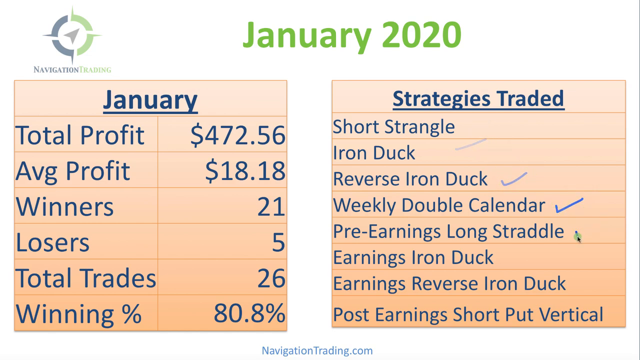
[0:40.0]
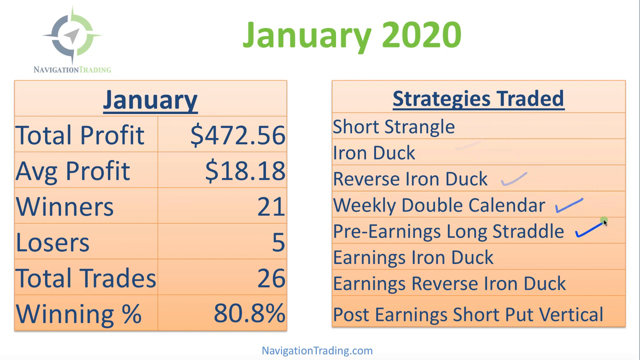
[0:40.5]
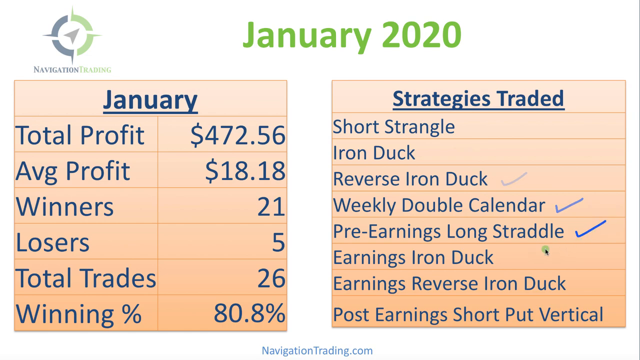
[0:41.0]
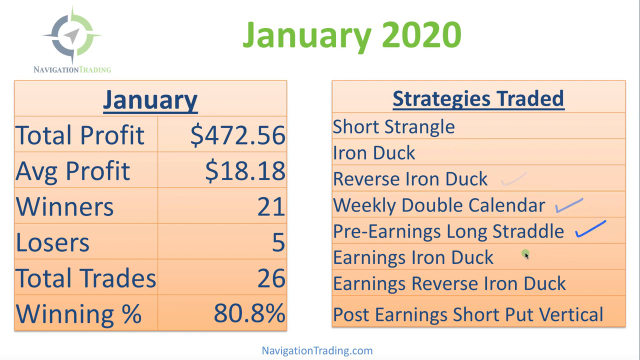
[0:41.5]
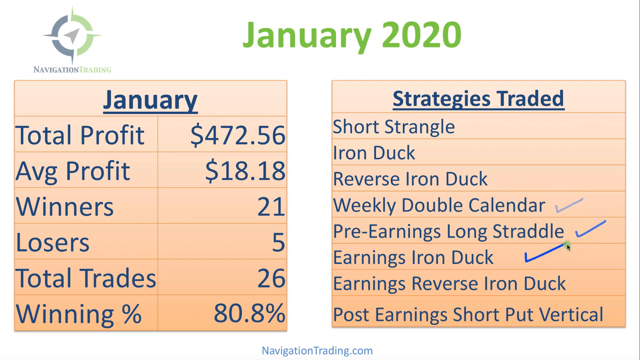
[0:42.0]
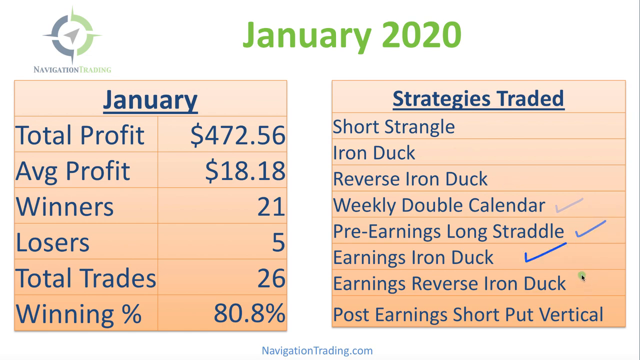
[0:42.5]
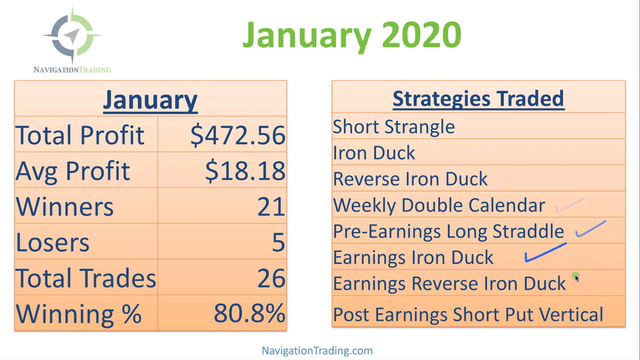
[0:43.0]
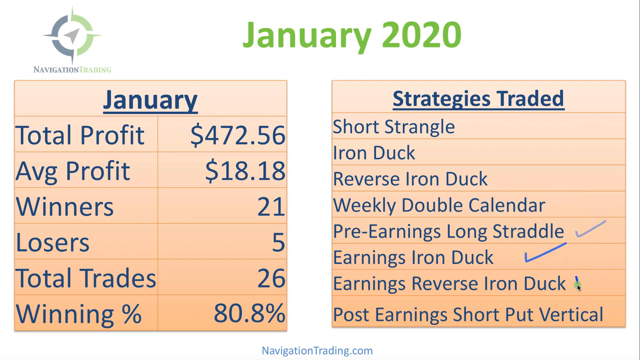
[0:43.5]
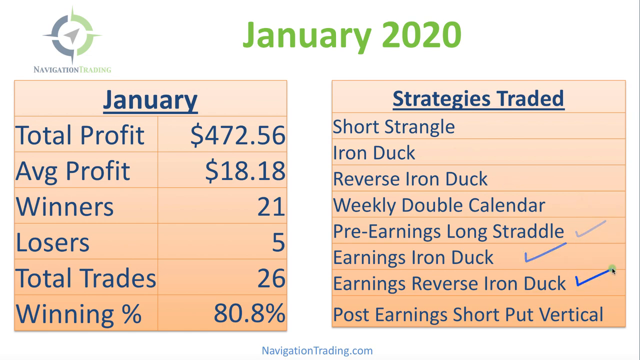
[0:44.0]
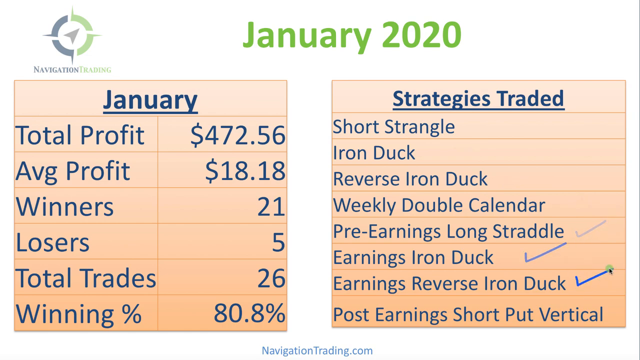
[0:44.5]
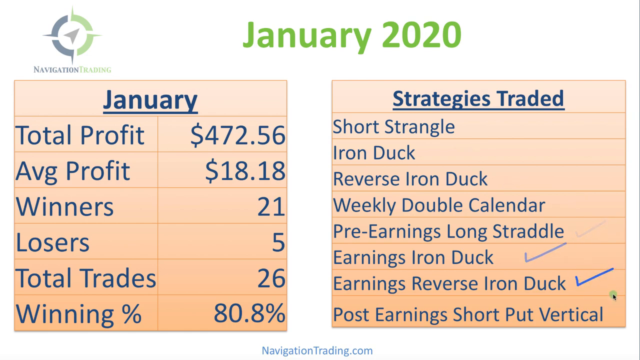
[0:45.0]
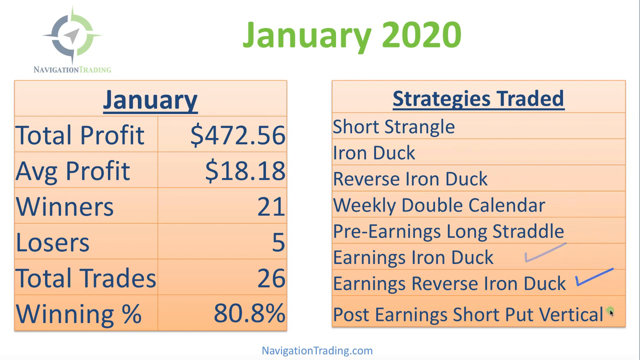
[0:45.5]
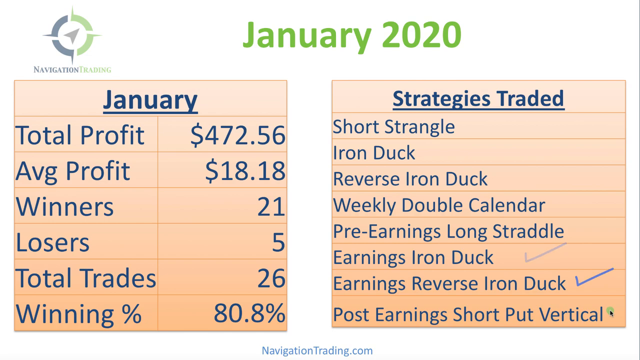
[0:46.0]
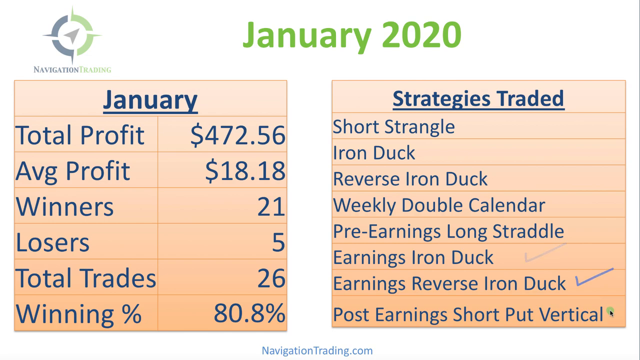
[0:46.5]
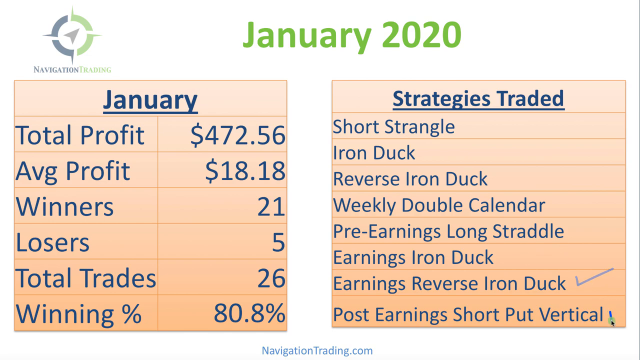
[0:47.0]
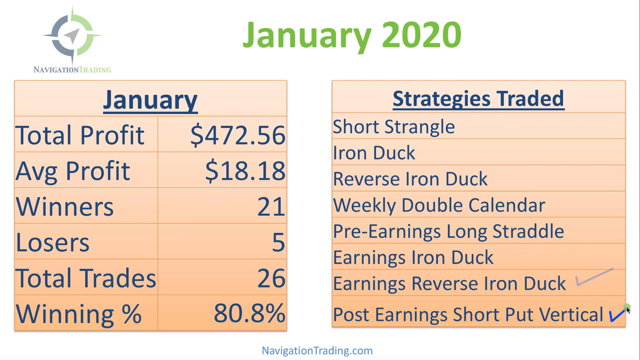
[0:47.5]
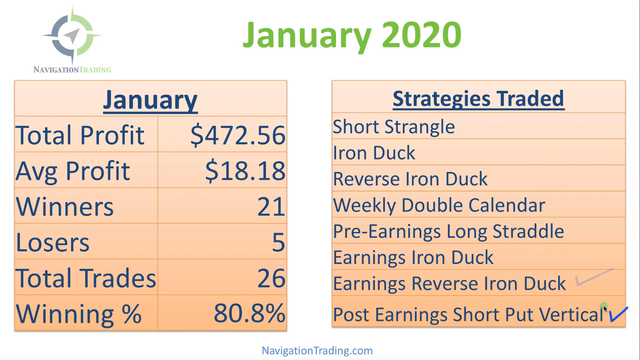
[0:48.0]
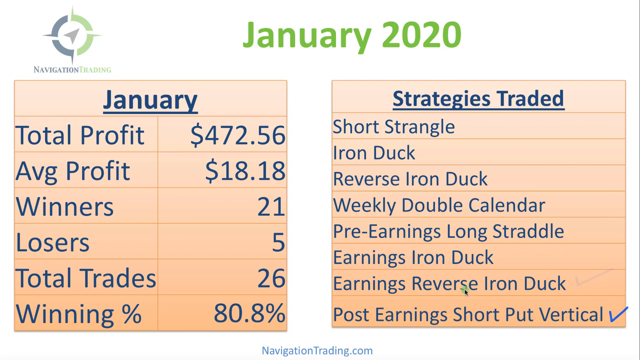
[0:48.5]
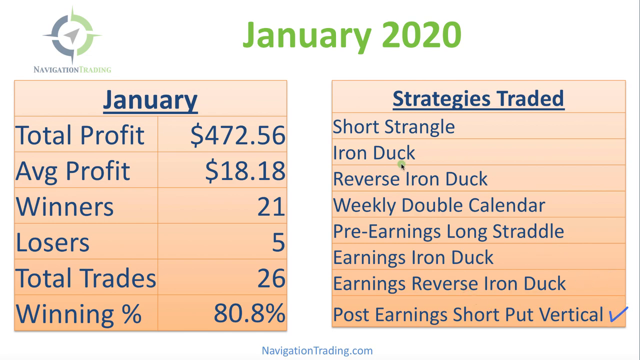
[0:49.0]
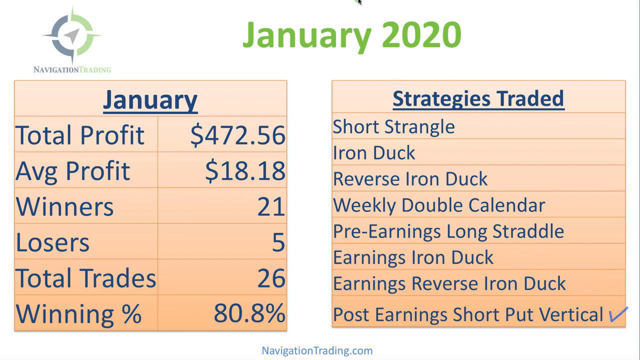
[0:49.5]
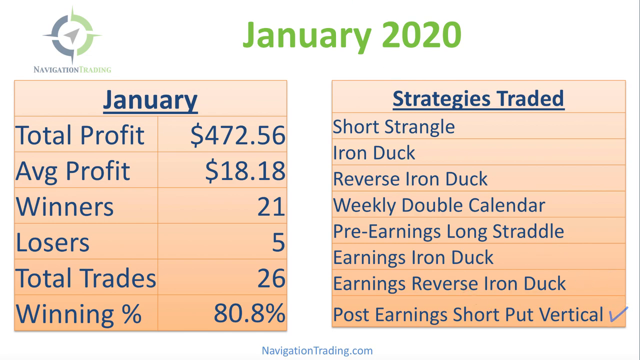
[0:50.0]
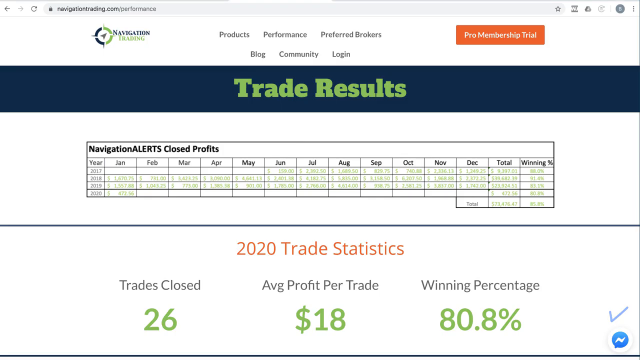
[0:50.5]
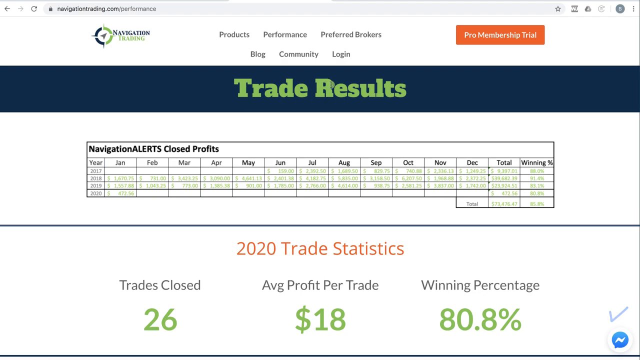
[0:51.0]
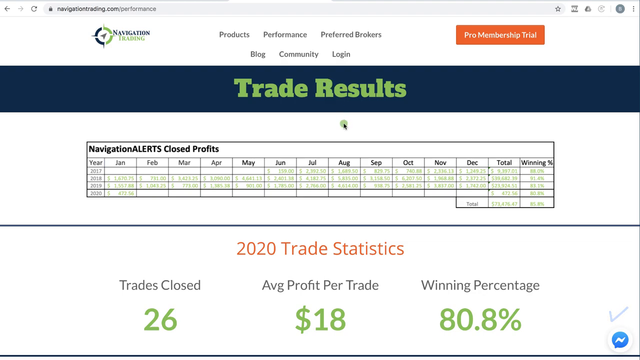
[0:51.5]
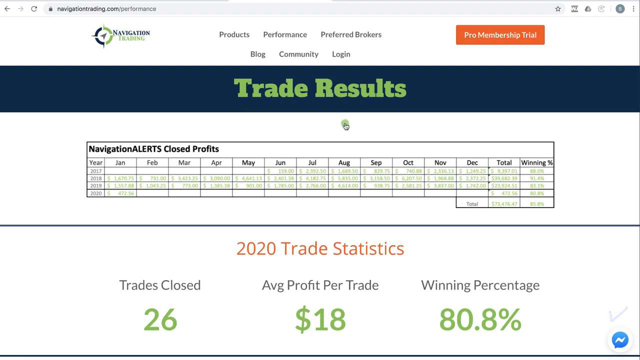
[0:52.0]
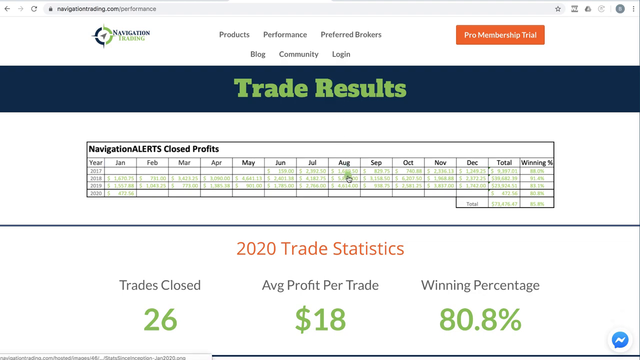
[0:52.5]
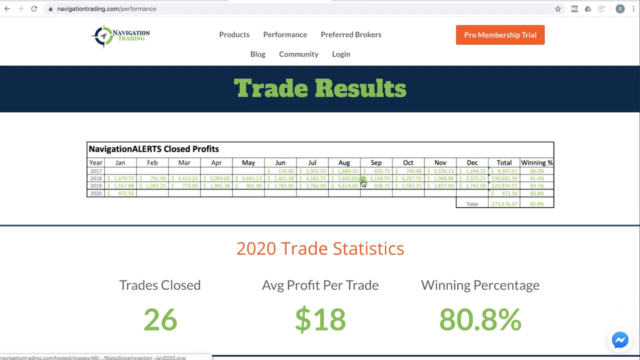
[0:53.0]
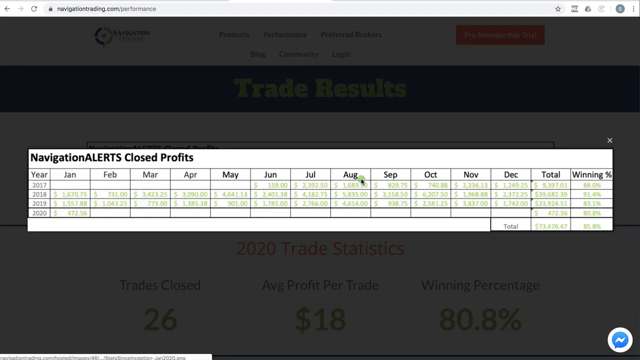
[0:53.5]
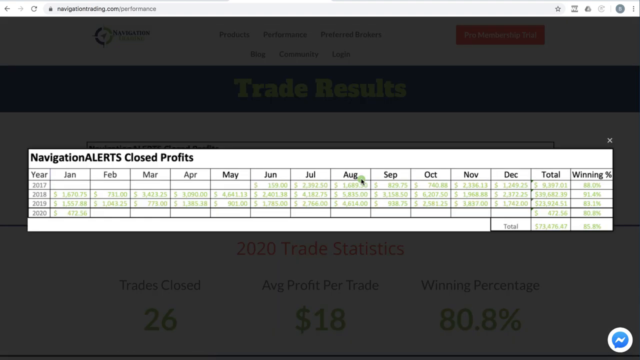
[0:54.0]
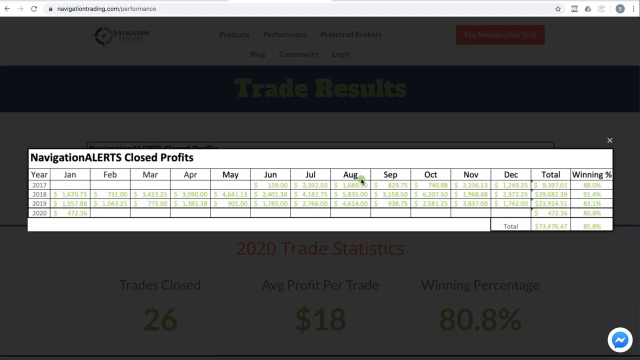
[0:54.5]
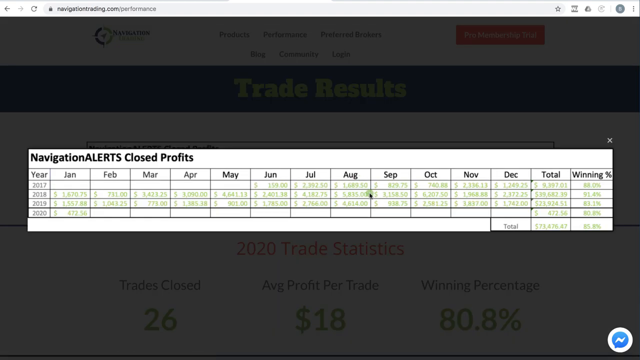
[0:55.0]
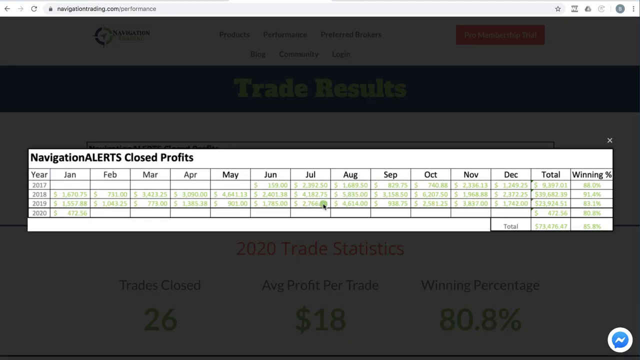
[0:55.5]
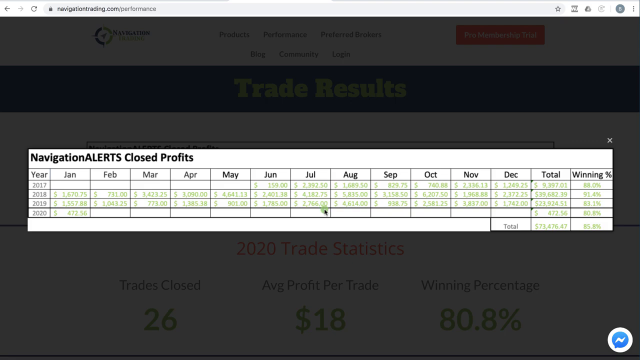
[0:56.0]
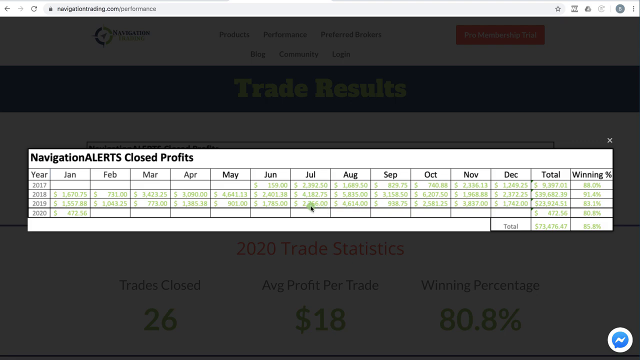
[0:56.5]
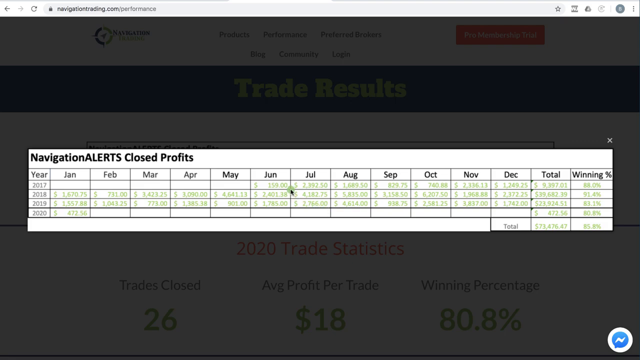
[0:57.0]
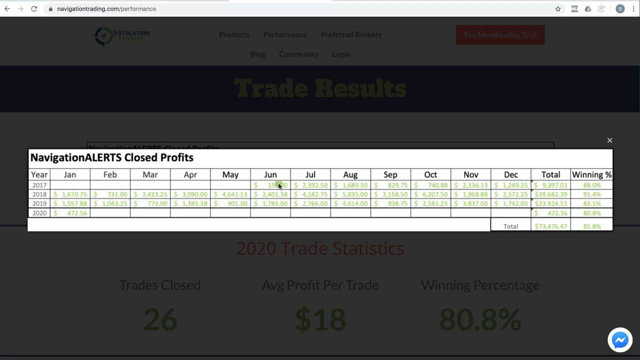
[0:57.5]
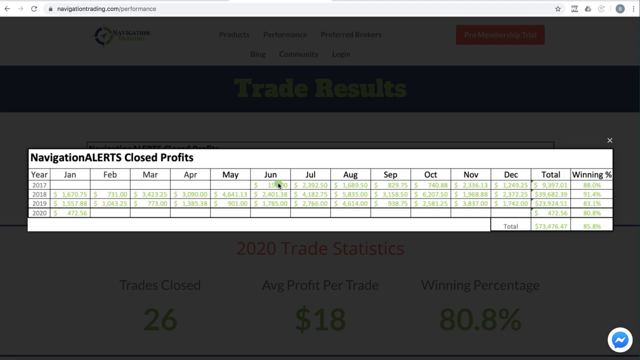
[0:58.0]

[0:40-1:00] Monthly figures and strategies are shown with total profit, average profit, winners and losers, along with trade results and a section labeled navigation and alerts. Sections include winners and losers, pre-earnings long straddle, earnings strategies, reverse iron dust and the regular iron duct, with the strategies organized in rows. Areas on the left-hand side show different months with their profits, and there is an orange background with blue writing over it.